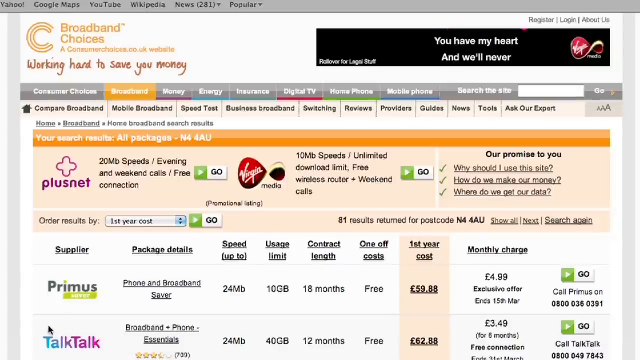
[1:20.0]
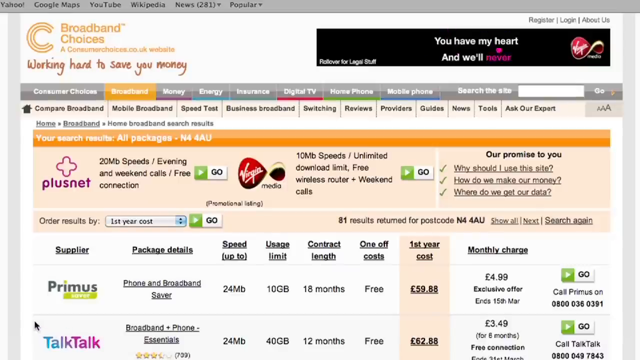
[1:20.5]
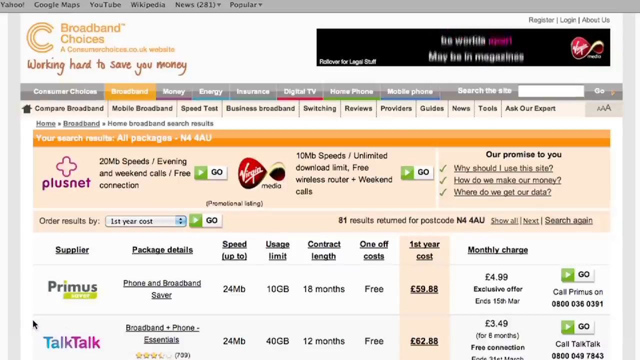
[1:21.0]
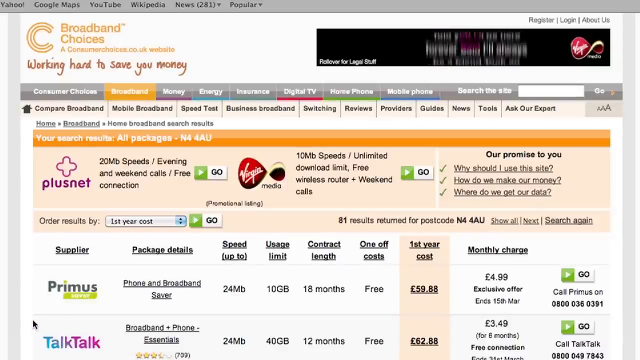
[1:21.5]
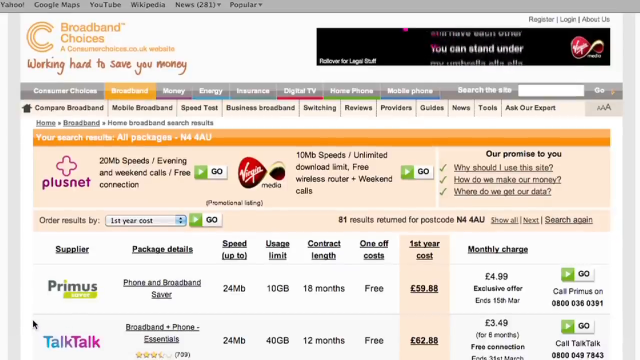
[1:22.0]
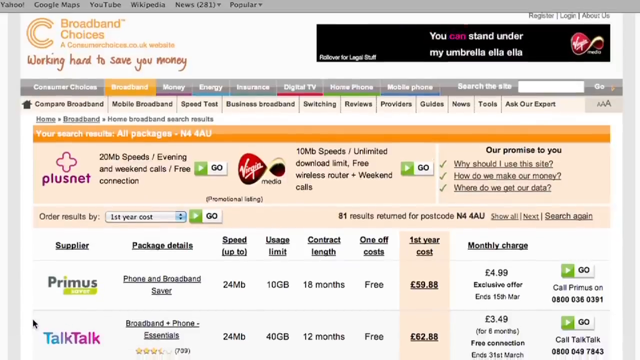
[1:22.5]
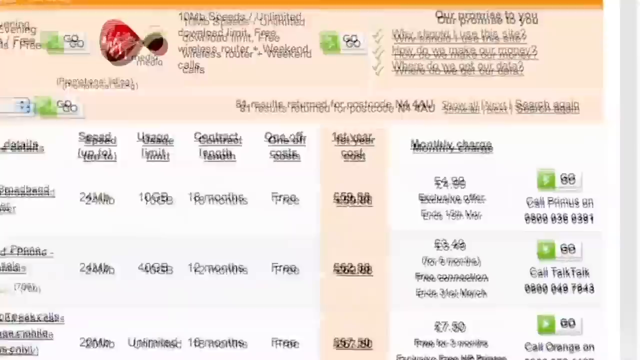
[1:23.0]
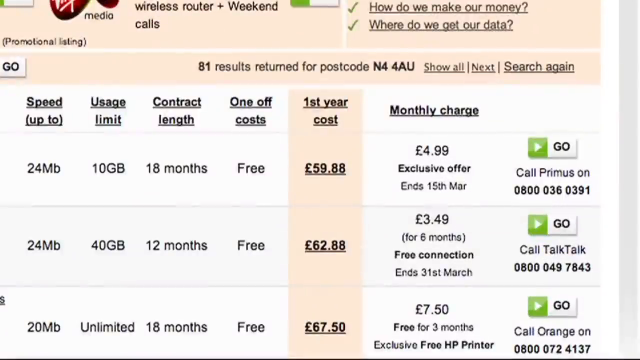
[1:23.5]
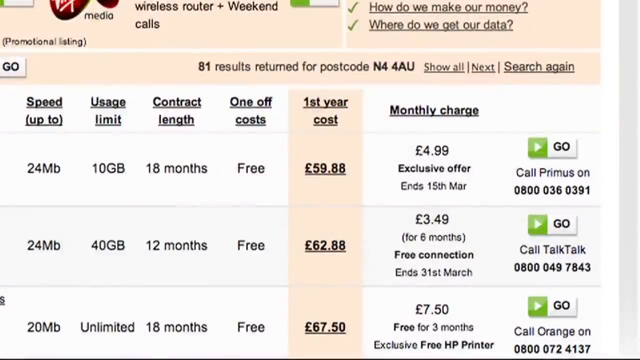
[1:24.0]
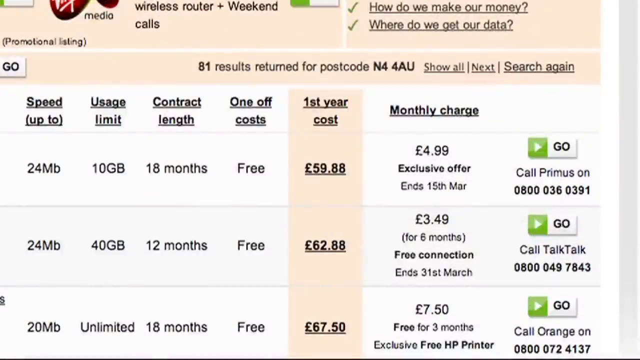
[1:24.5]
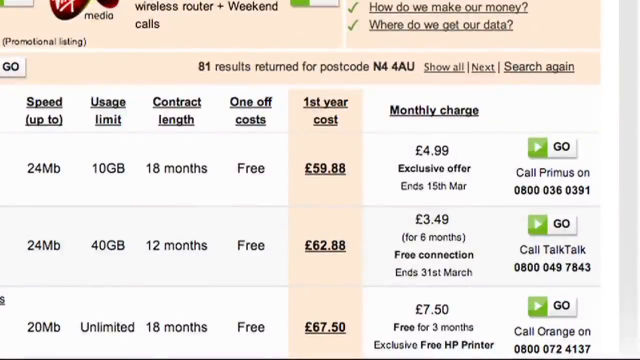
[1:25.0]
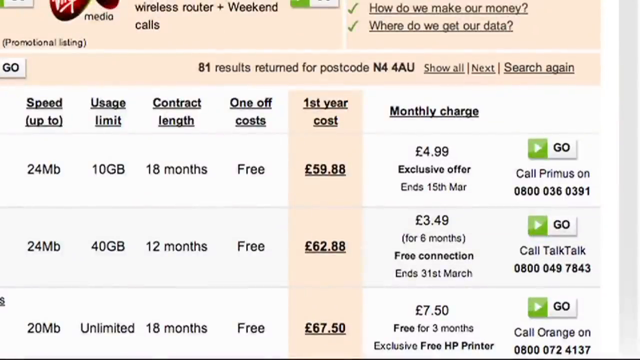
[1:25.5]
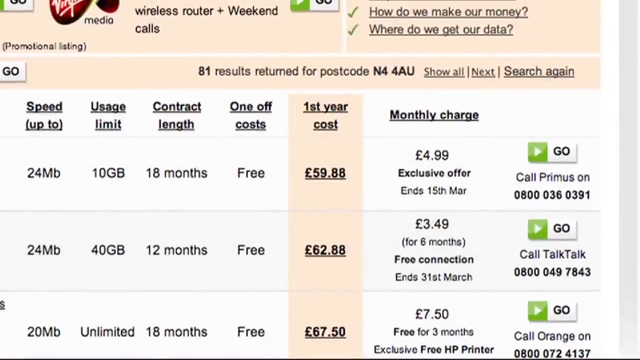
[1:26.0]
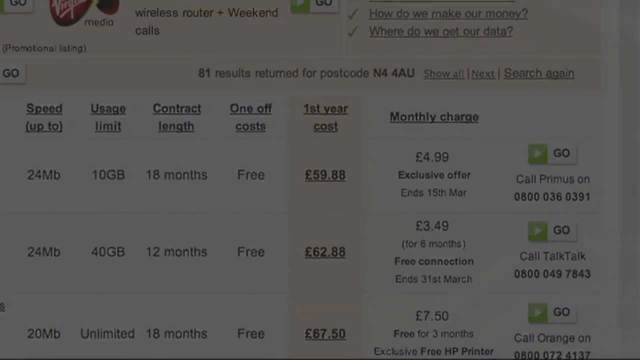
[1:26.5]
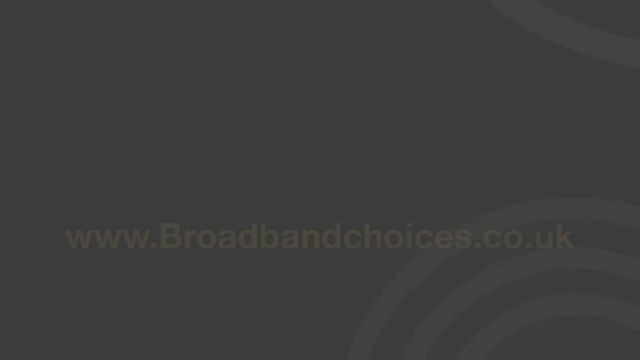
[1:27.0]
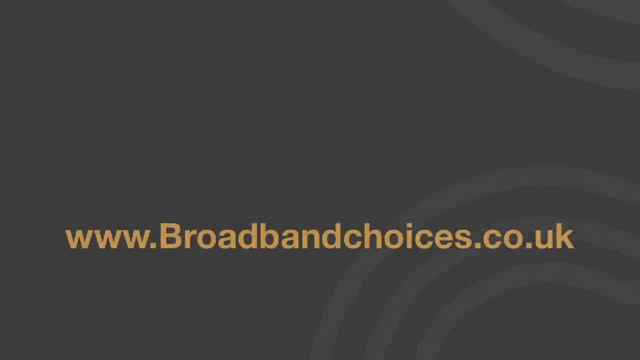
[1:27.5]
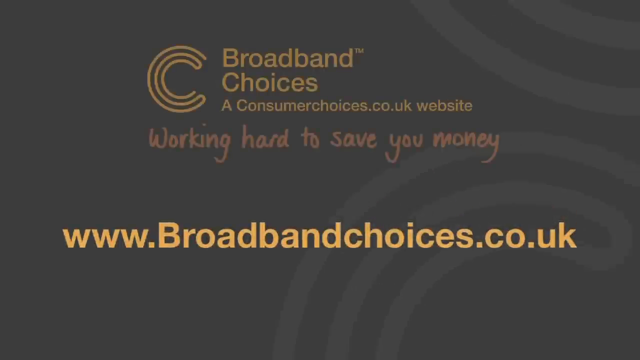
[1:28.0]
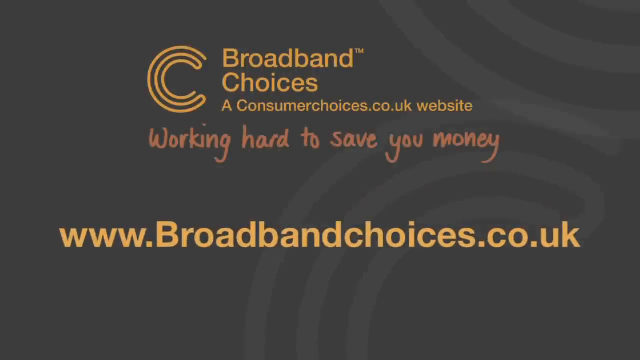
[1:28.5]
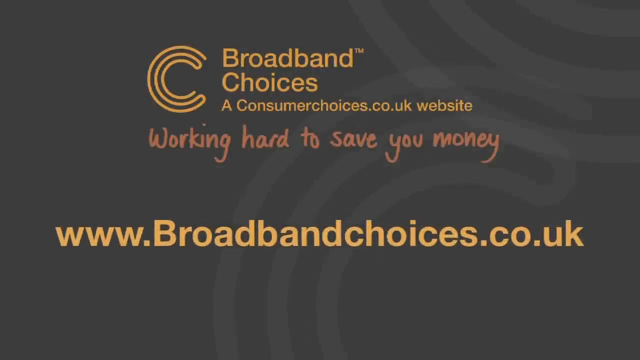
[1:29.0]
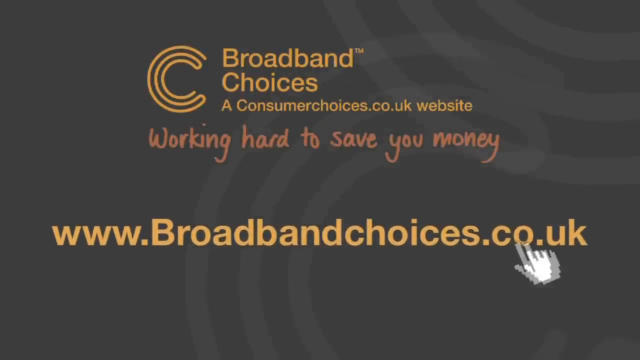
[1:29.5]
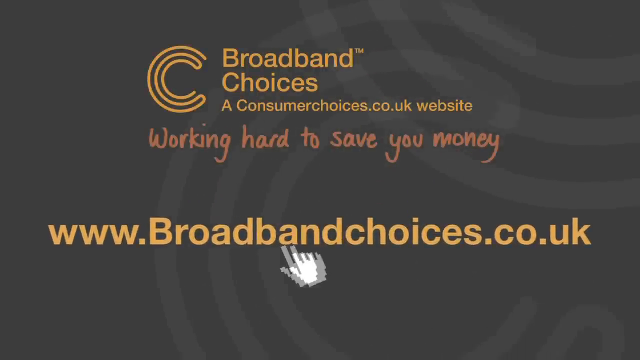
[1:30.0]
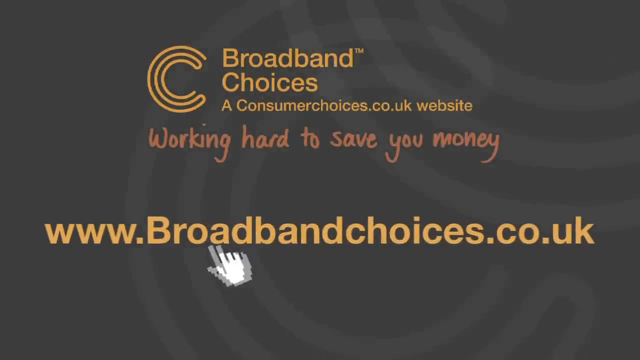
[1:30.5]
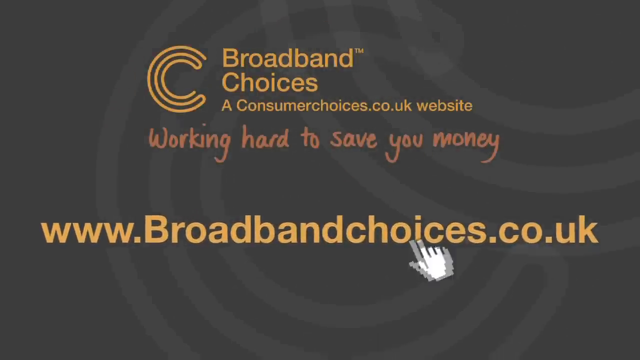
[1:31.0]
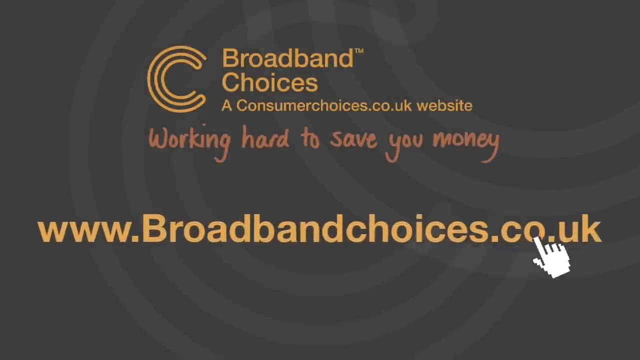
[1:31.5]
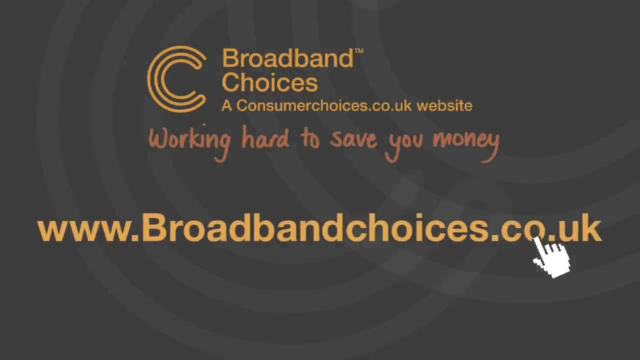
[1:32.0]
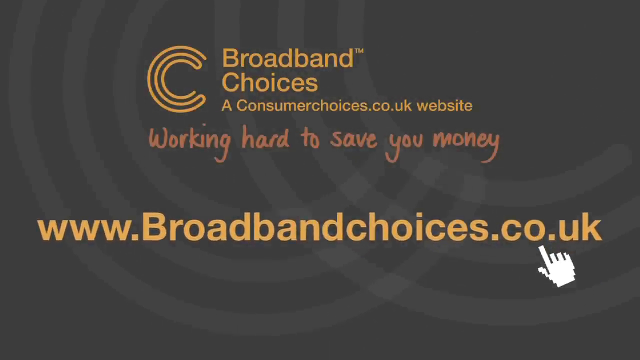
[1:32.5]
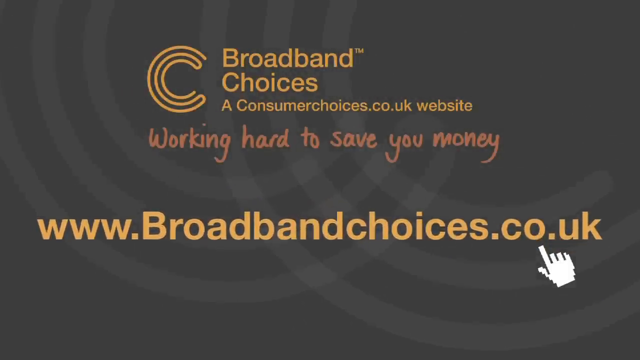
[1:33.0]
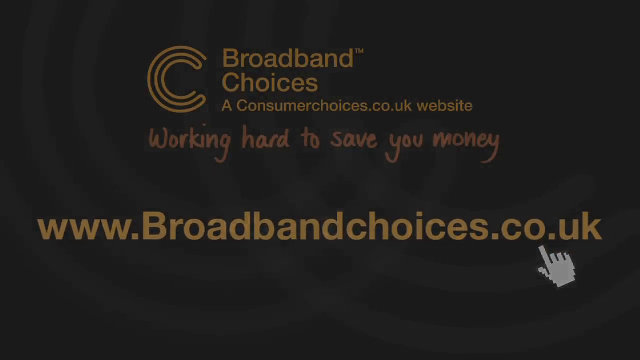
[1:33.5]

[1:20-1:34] Using the entered code, the site brings up about 80 bundles available on the broadband choices site, ranging from 10 pounds upwards. The results show the speed, the usage limit, the contract length, the one-off cost, the one-year cost, the monthly charges, and a number to call Primus at any time on any day.